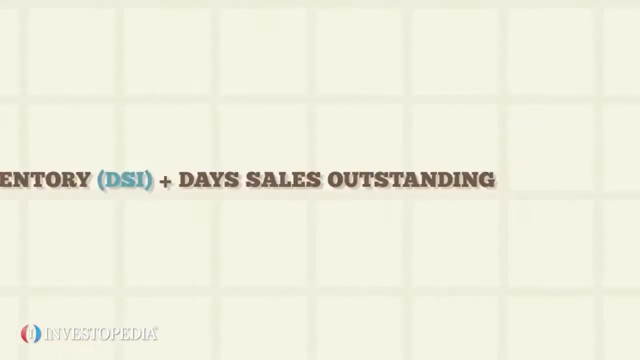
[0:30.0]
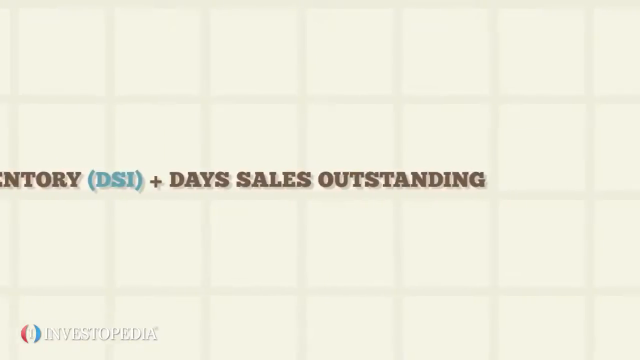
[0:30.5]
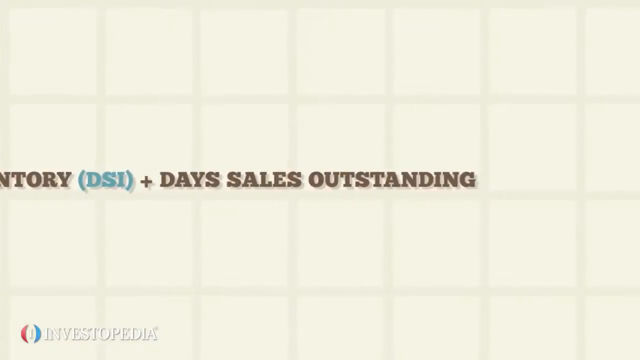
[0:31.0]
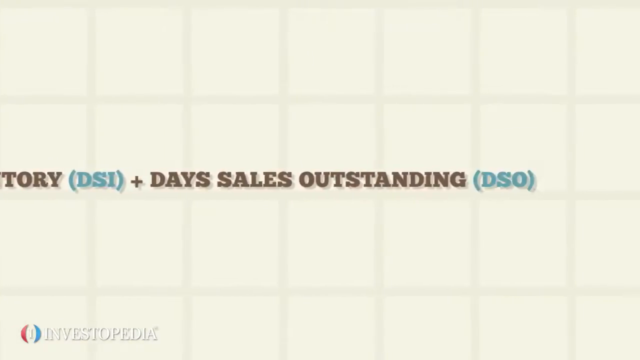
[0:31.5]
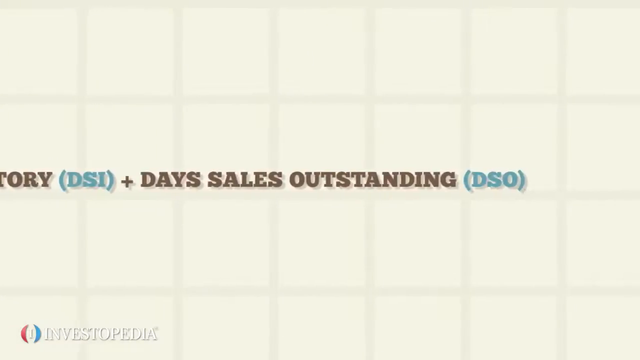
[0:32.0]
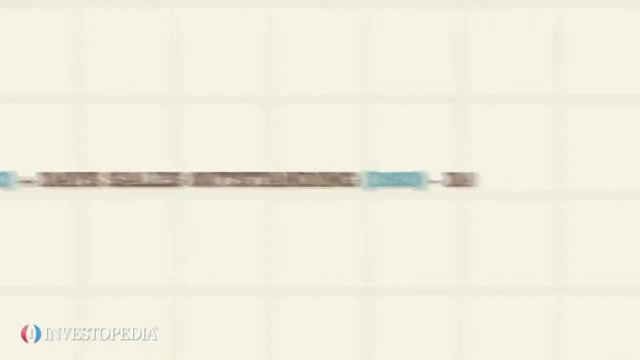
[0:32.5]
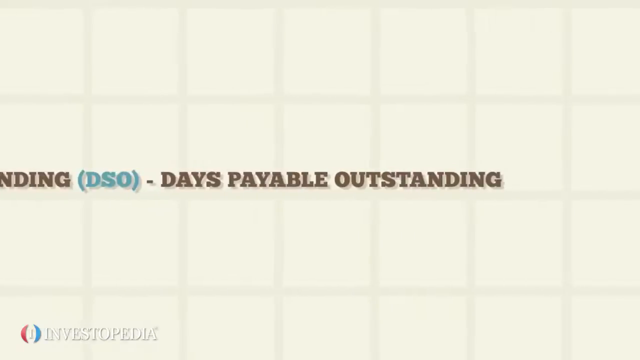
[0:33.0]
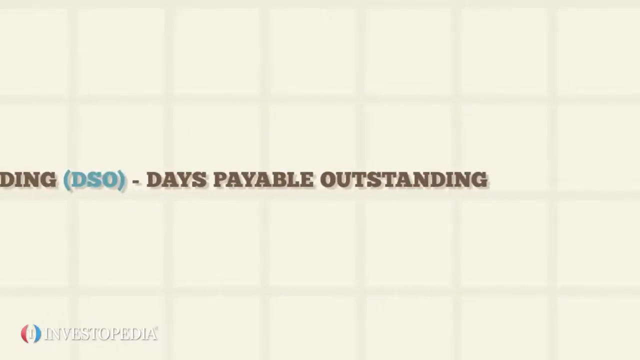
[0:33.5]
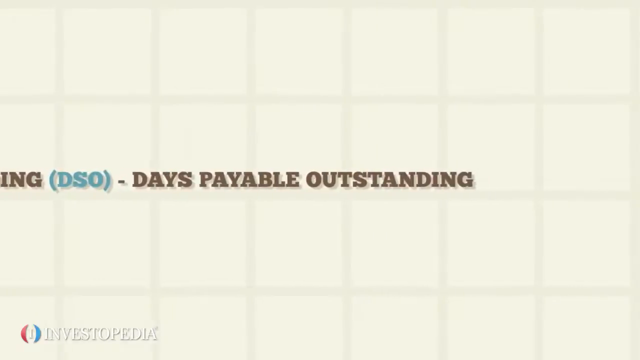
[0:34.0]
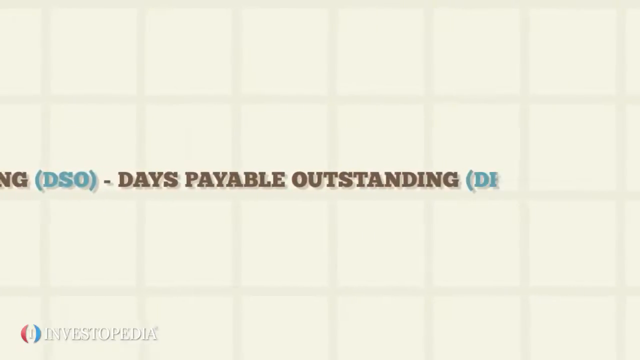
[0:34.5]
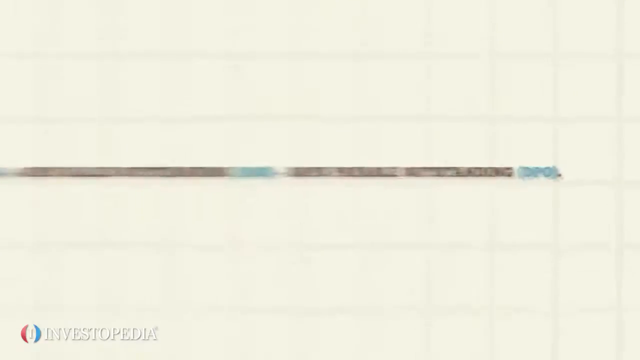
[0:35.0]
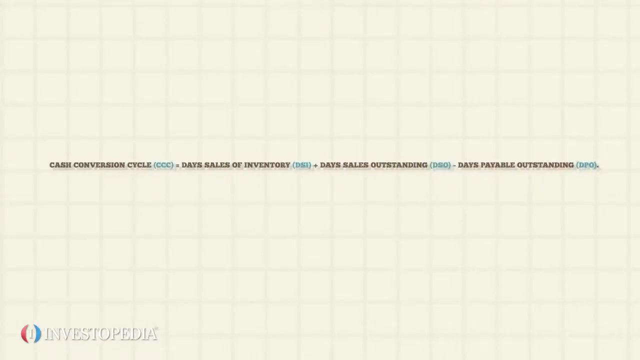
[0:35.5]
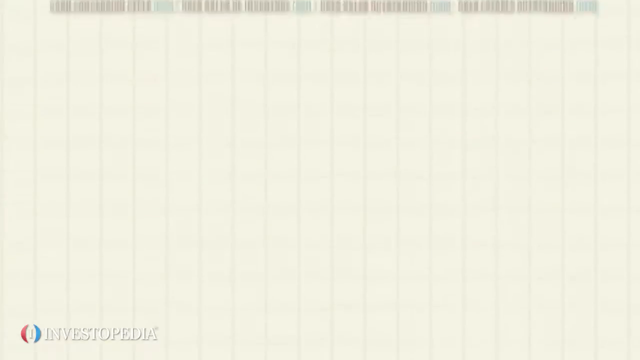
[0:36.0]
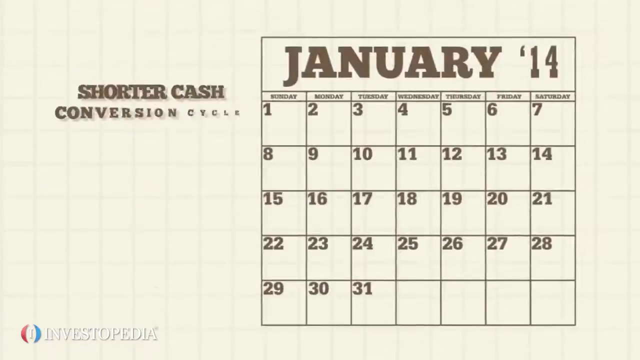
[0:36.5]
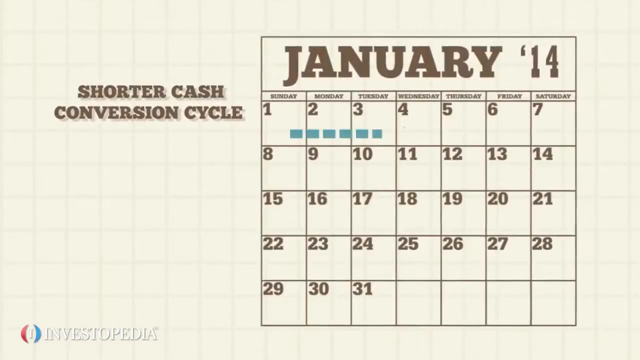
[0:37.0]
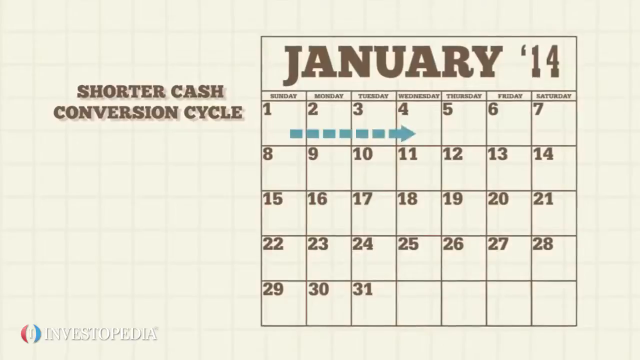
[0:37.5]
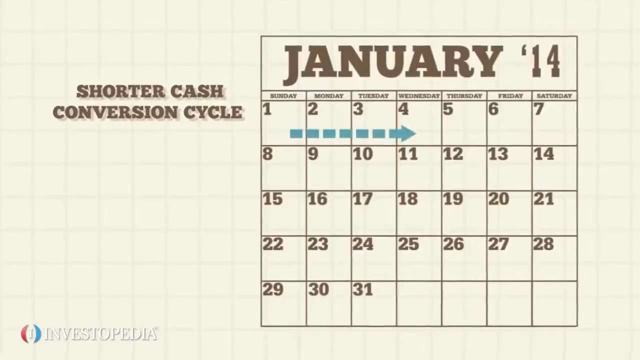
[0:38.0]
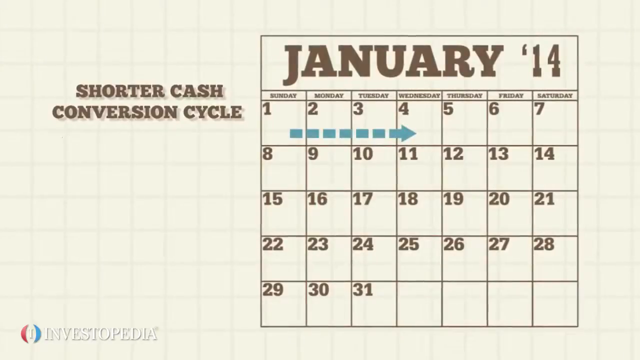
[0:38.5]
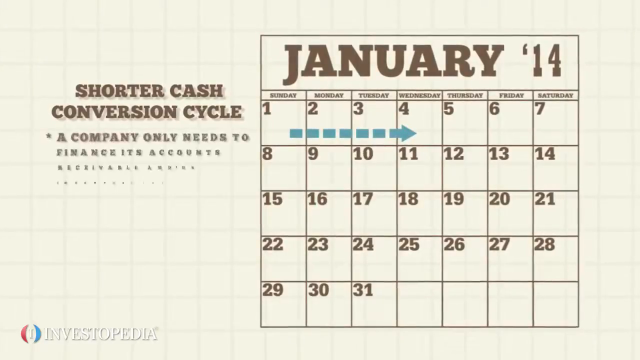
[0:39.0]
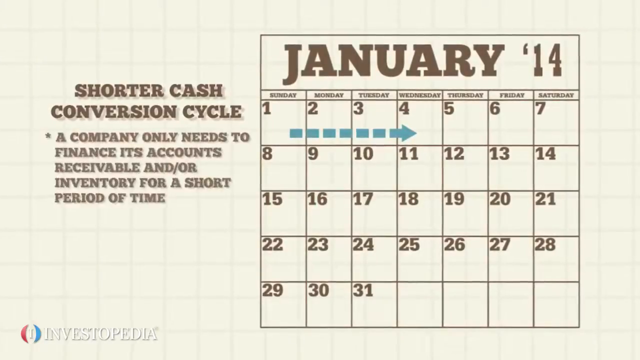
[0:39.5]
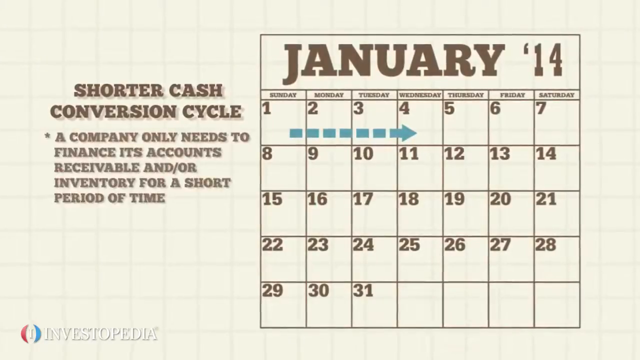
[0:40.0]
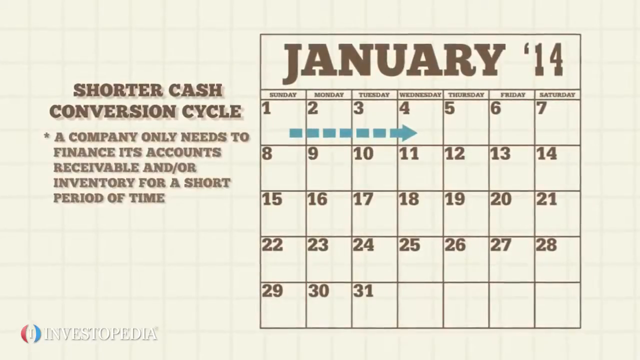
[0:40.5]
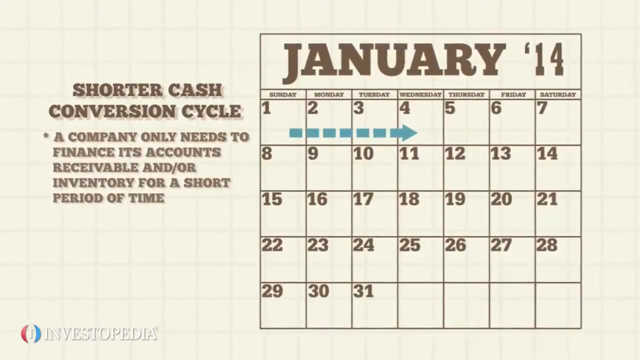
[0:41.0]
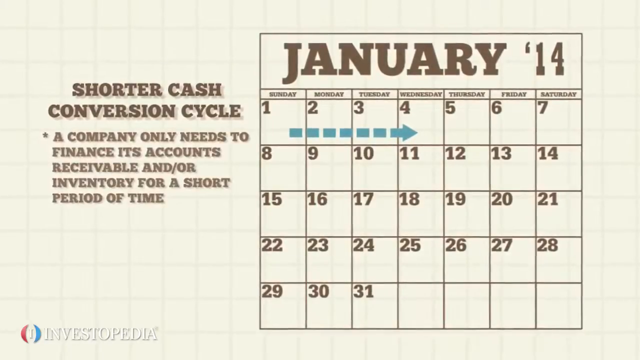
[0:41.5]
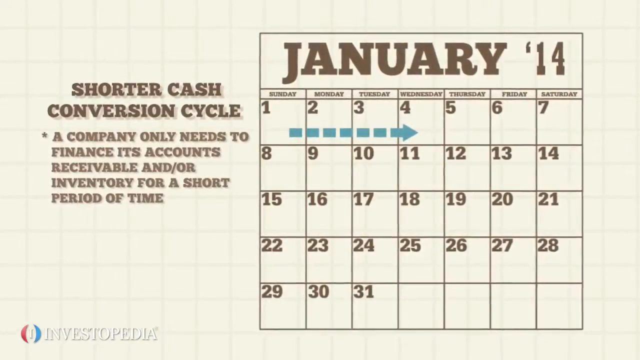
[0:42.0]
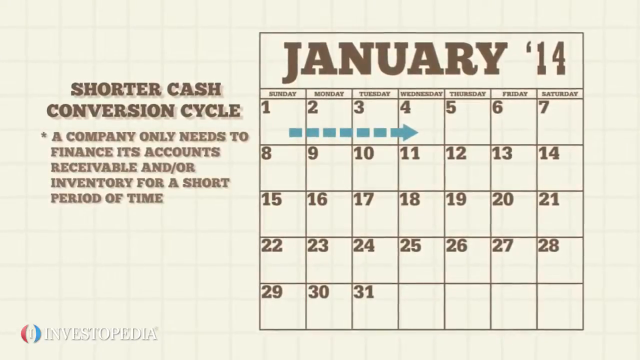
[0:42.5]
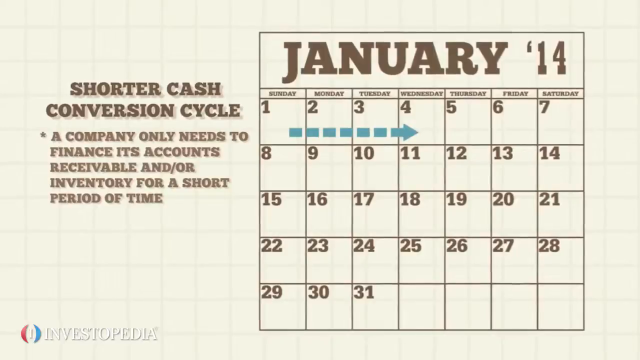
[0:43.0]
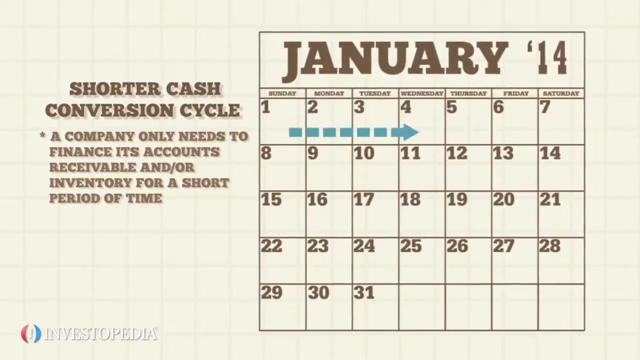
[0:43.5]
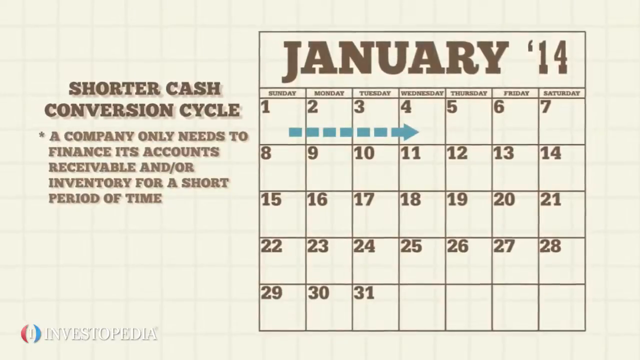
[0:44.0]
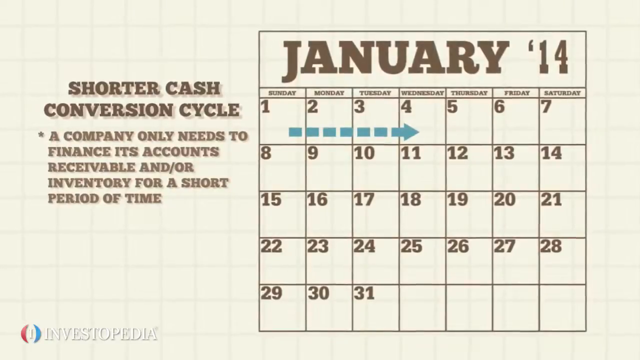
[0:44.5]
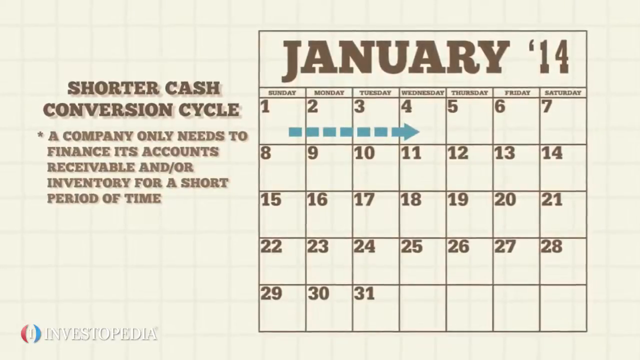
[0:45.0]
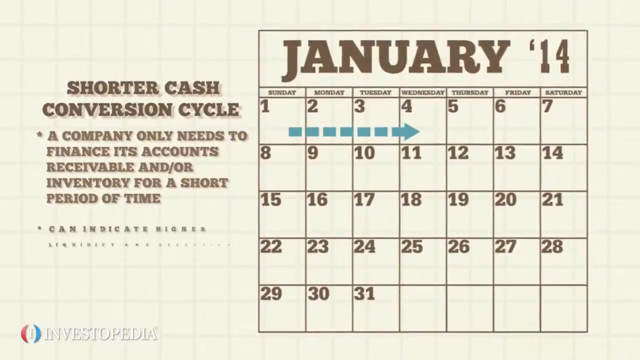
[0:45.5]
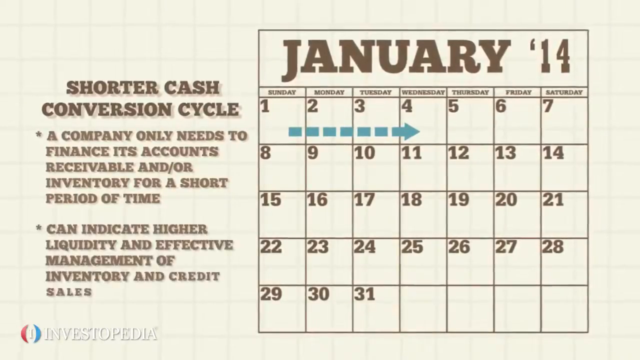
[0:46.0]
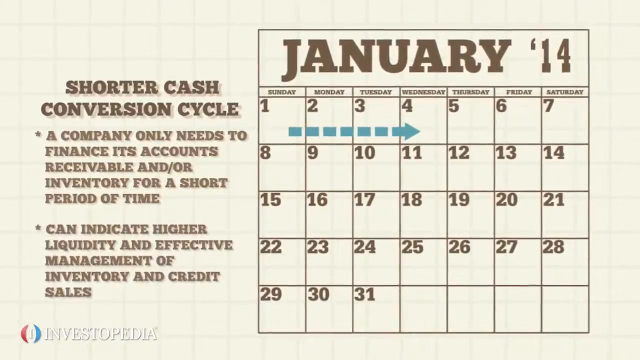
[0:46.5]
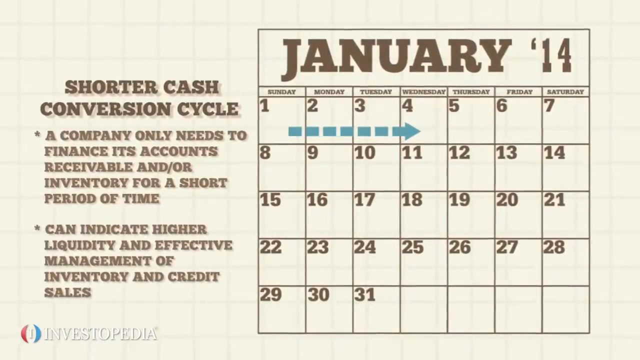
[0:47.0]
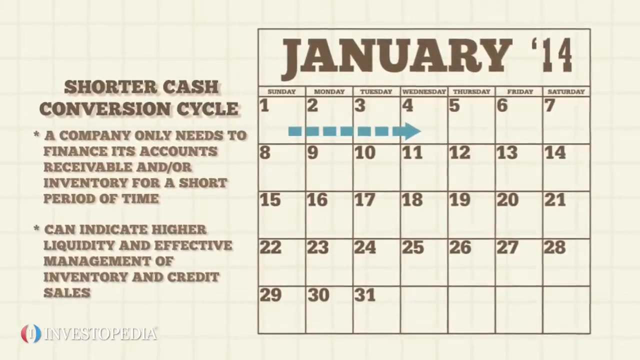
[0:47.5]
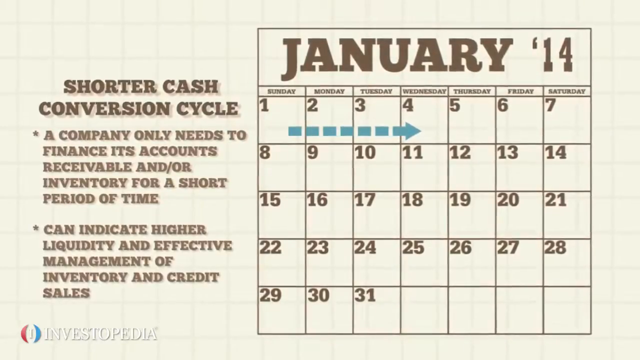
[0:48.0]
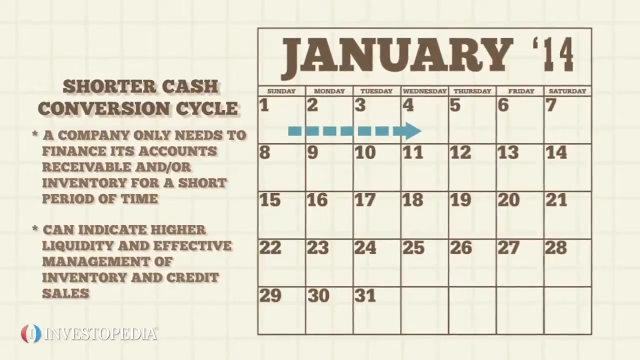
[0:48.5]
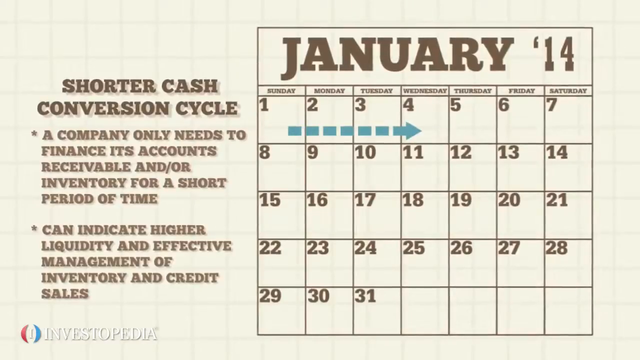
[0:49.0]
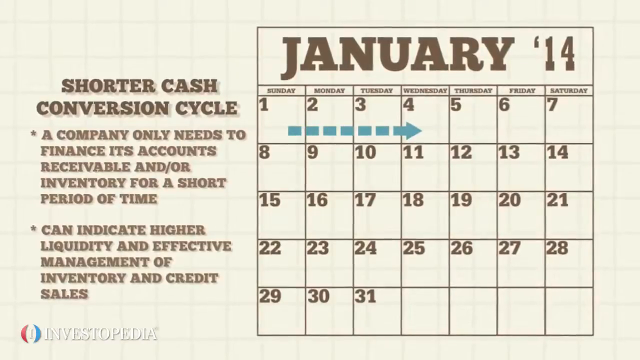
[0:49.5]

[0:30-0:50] Information moves from left to right, then disappears upward. A calendar appears with "January 14". At the upper left is "shorter cash conversion cycle", written in brown; the numbers, "January 14" and the names of the weekdays are also in brown. A line arrow moves from day one, on Sunday, to January 4, on Wednesday; it is on a bluish background. A bullet with information appears next to the "shorter cash conversion cycle" heading, and another bullet of information appears under the first one. The background still has the same small boxes.